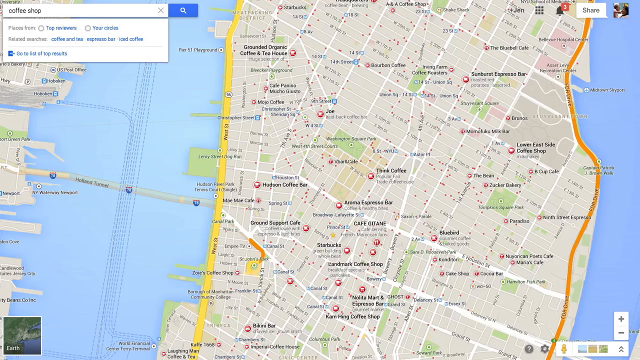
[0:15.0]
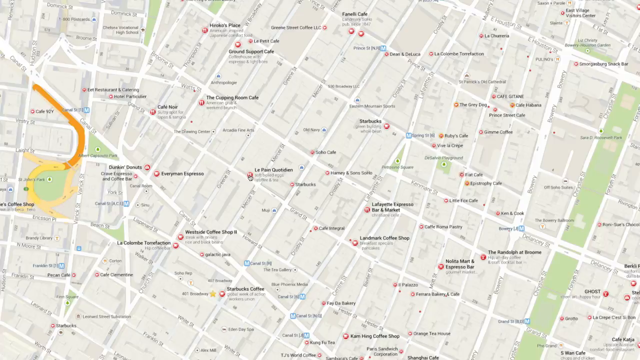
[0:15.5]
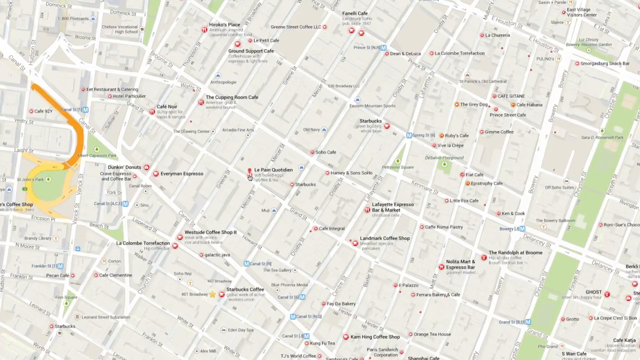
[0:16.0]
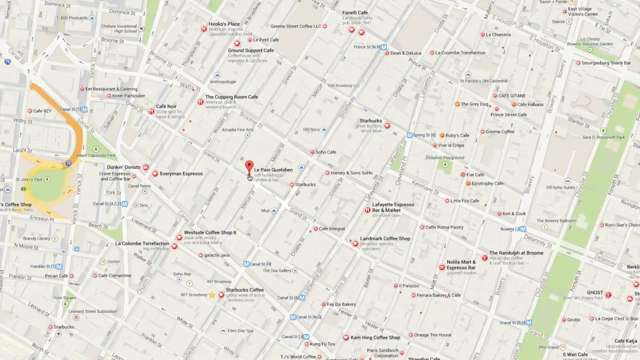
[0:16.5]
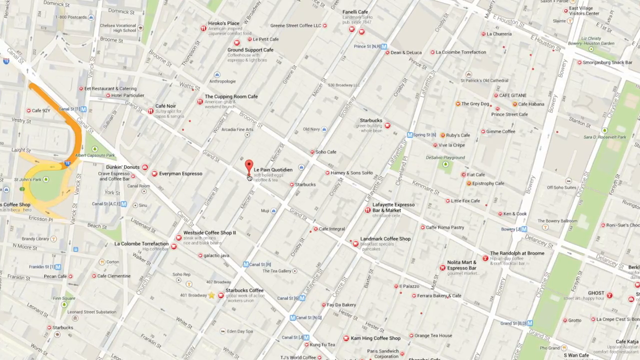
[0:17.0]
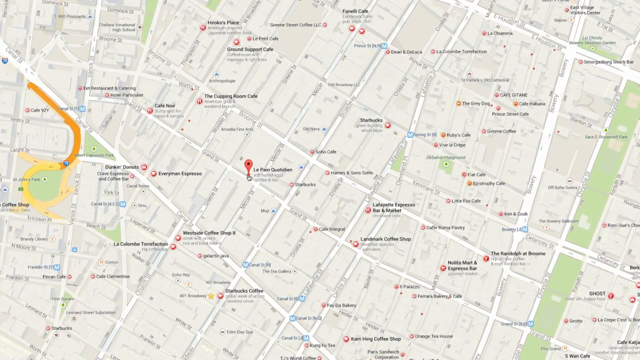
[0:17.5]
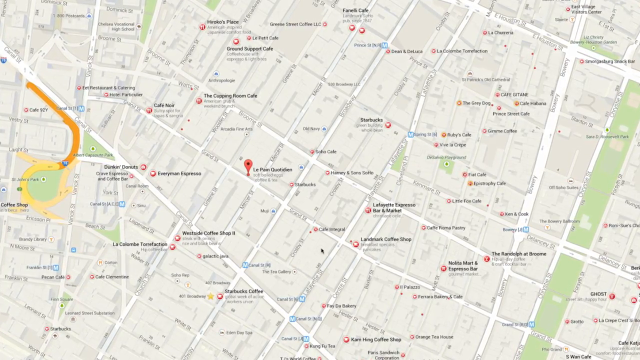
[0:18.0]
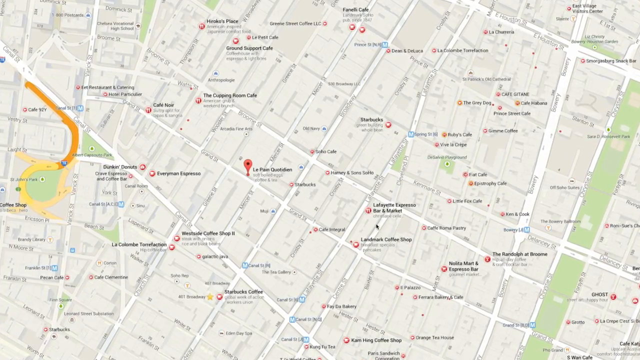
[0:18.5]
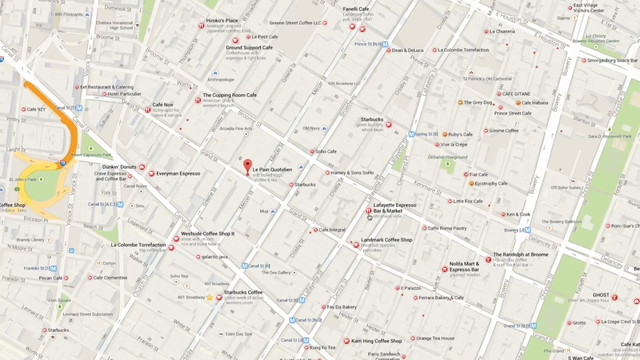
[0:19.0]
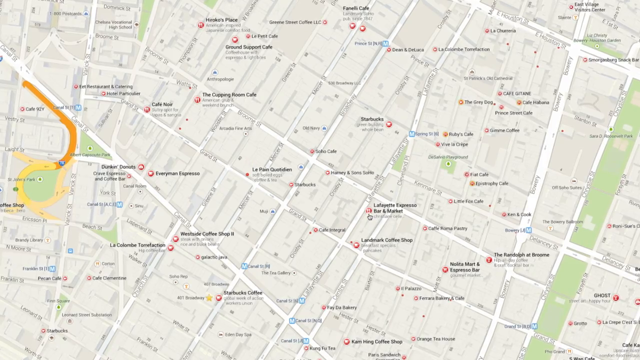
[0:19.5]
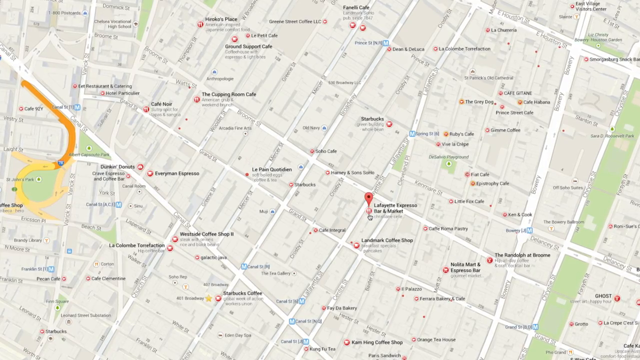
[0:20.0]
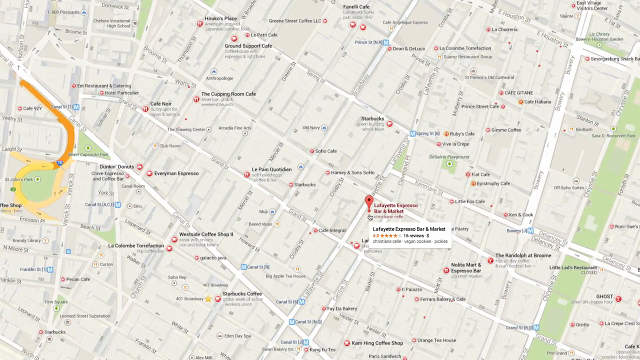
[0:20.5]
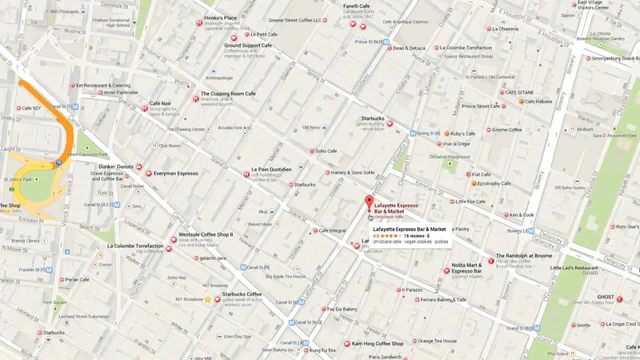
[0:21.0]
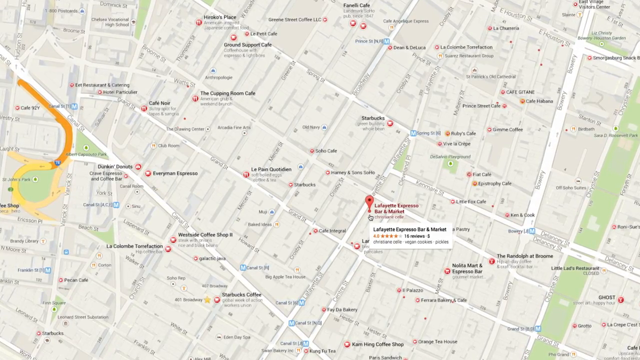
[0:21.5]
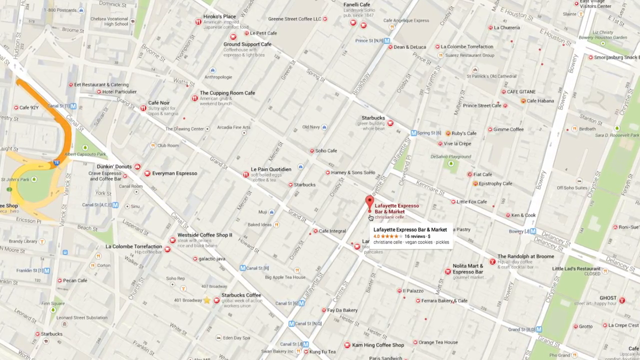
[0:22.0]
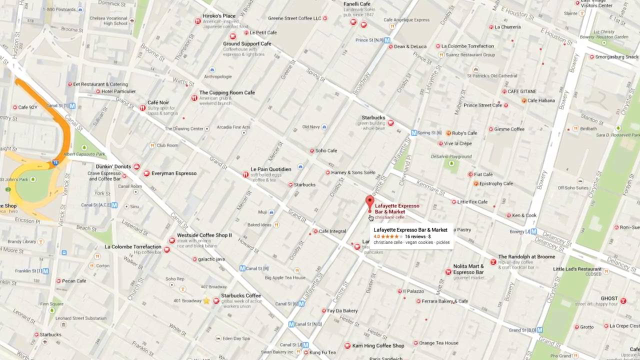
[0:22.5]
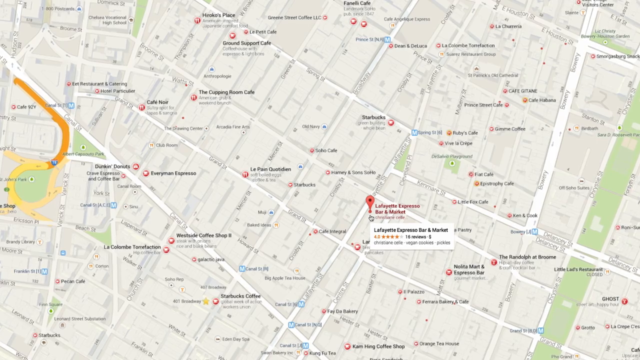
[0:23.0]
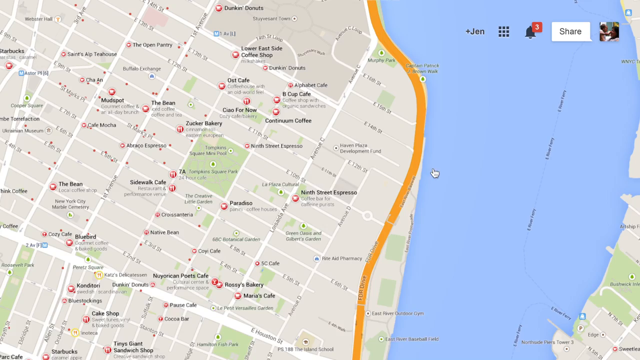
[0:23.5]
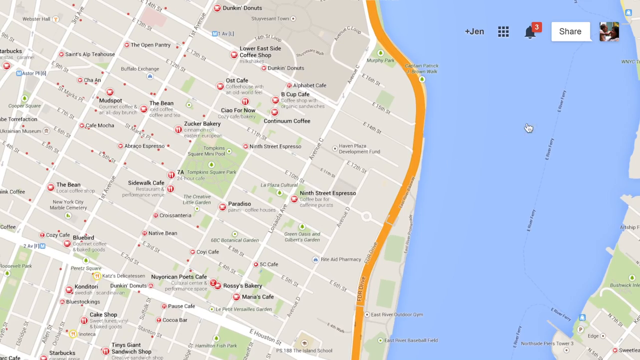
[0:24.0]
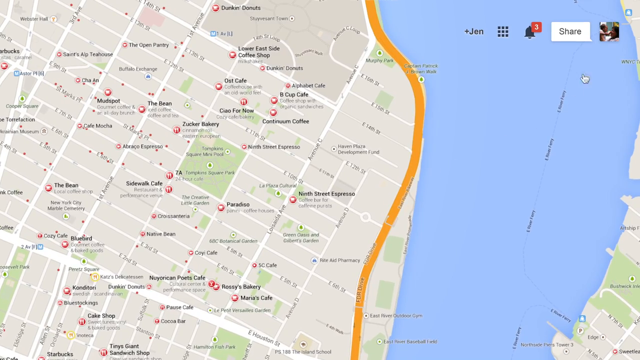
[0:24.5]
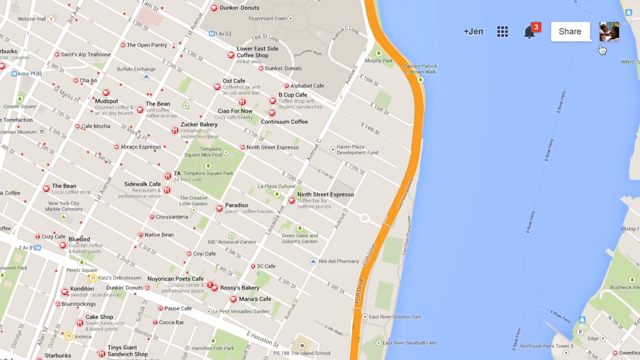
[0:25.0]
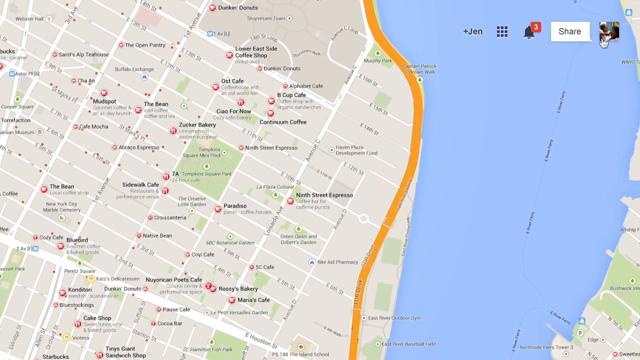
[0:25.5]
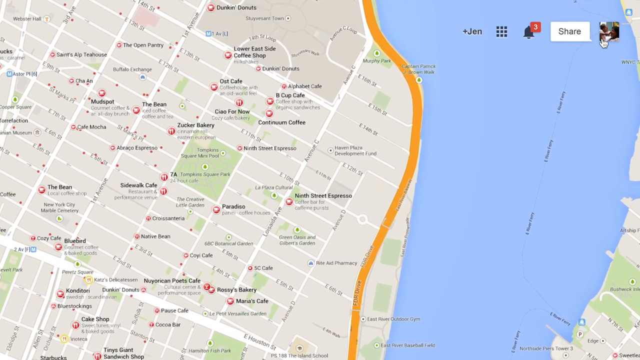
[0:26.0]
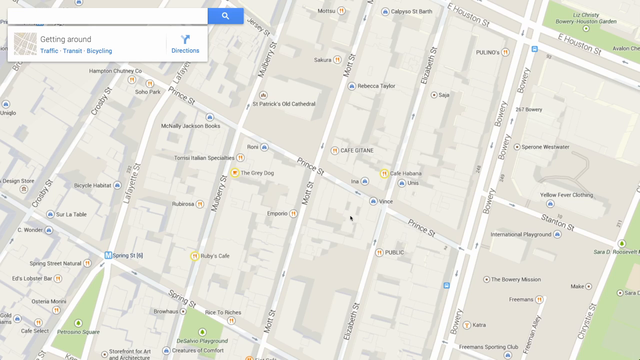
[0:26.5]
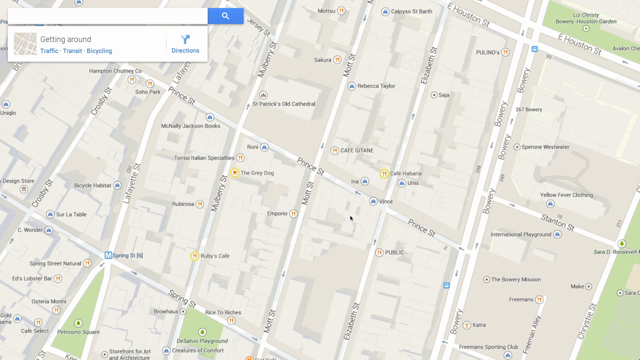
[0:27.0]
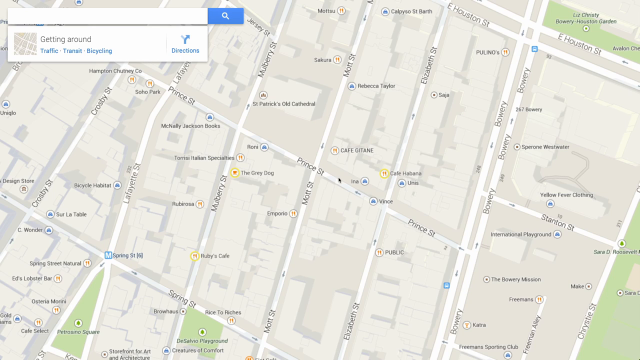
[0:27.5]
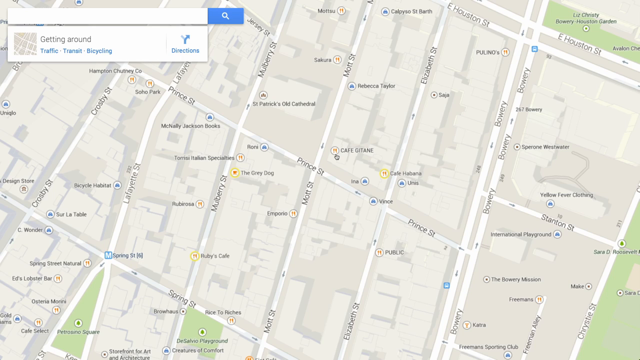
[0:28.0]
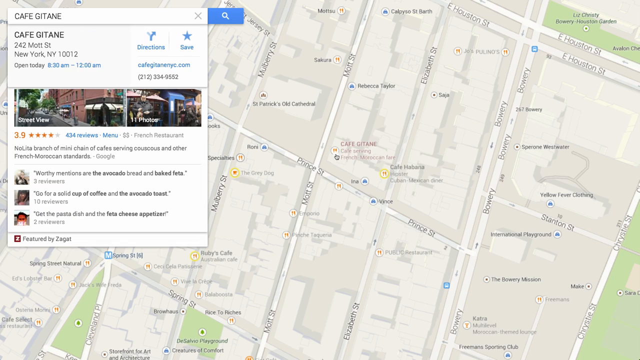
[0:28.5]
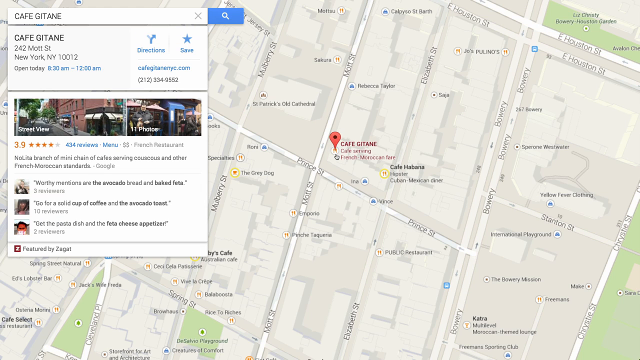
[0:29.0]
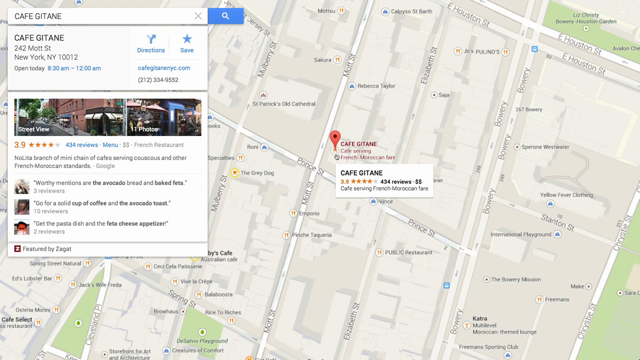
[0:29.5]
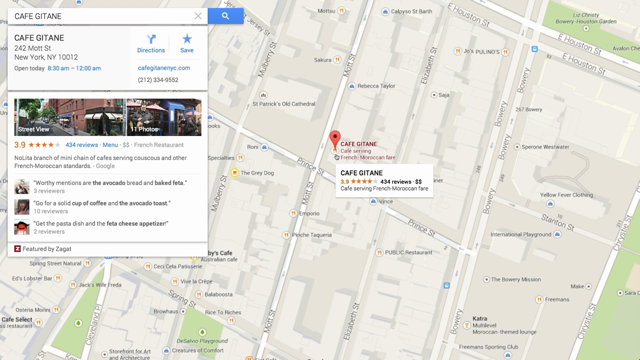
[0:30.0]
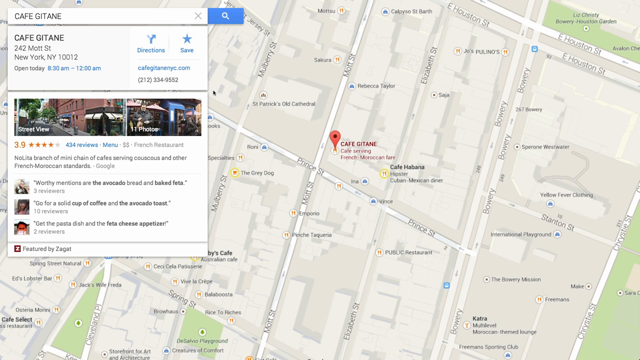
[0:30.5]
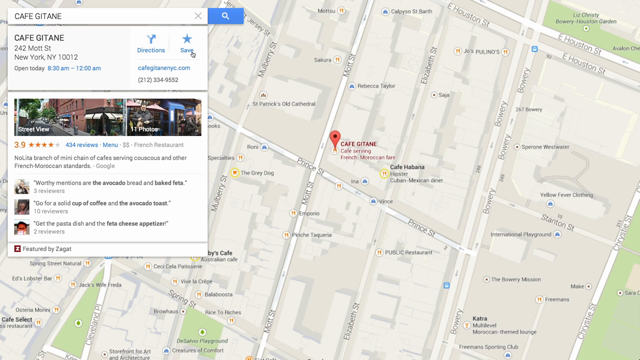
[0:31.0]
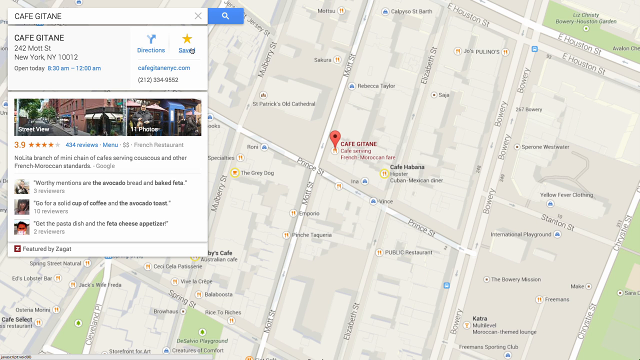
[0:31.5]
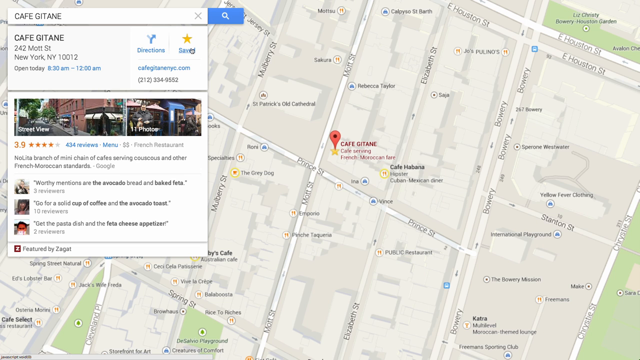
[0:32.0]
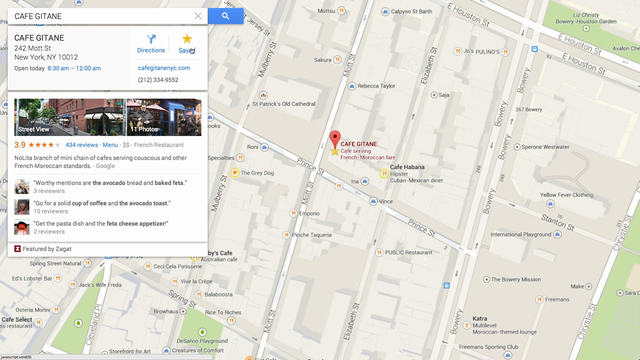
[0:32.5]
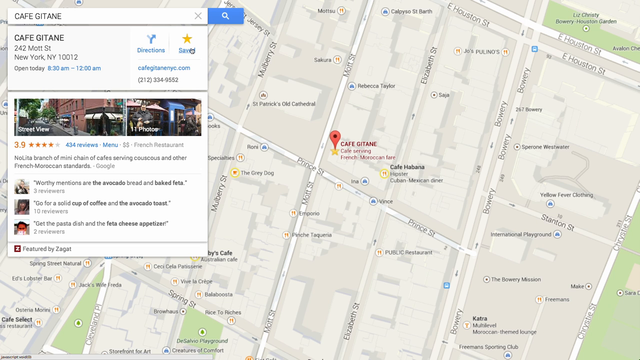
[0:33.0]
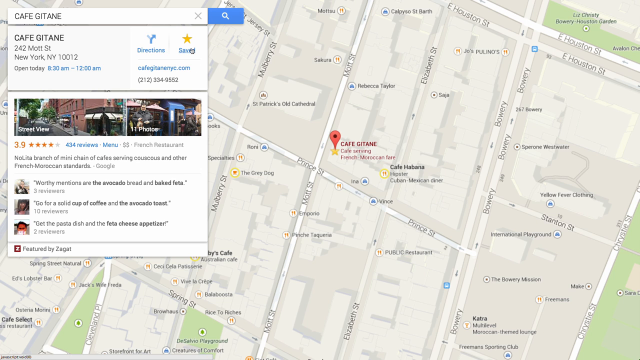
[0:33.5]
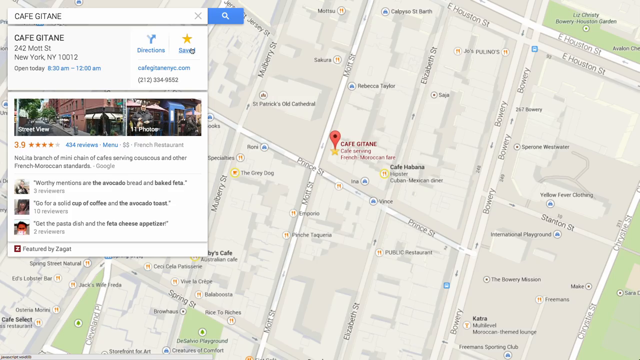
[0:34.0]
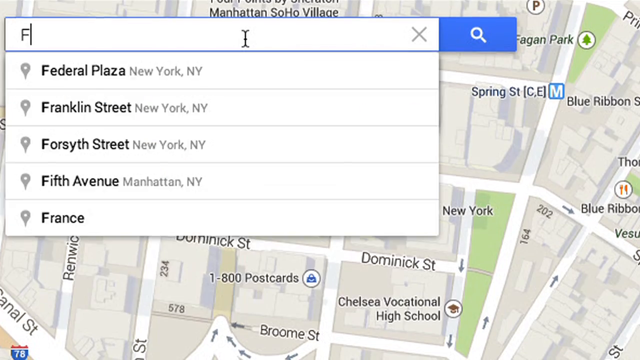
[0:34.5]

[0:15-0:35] An overhead shot of Google Maps shows a cursor clicking in the right-hand corner, apparently pulling up a cafe called Cafe Jetain in New York City. The person clicks on a little food icon on the map for the Lafayette Express bar and market; a little fork and knife icon is next to the Lafayette Express bar and market text. The cursor clicks on different cafes, and the save button is clicked for Cafe Jetain. The user then apparently types "Fiat" into the search box.